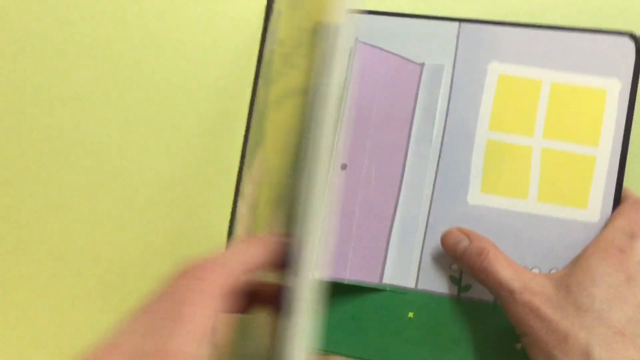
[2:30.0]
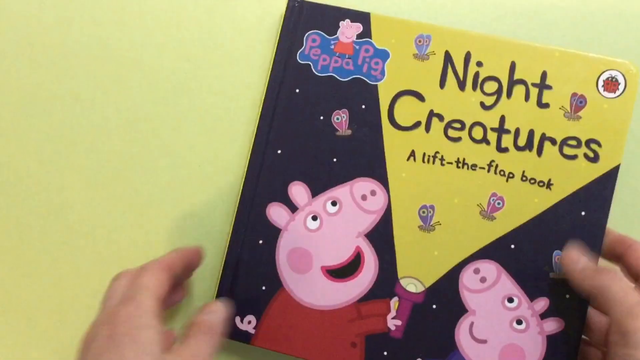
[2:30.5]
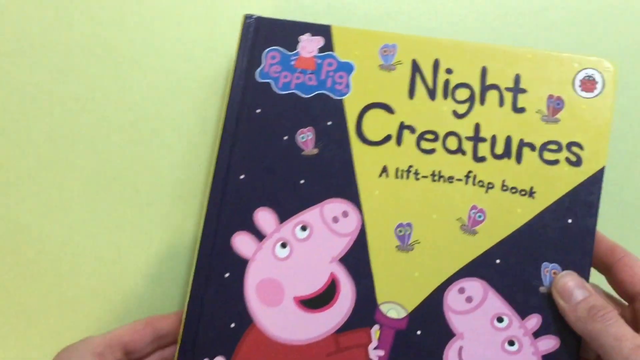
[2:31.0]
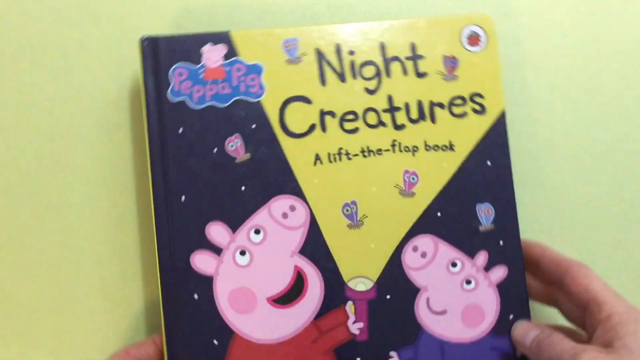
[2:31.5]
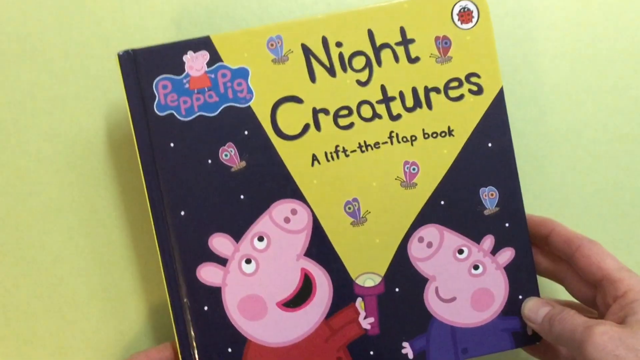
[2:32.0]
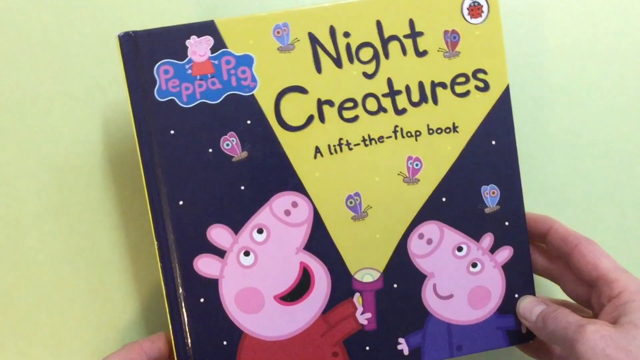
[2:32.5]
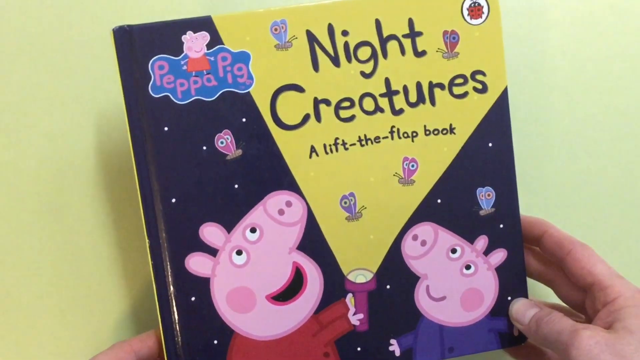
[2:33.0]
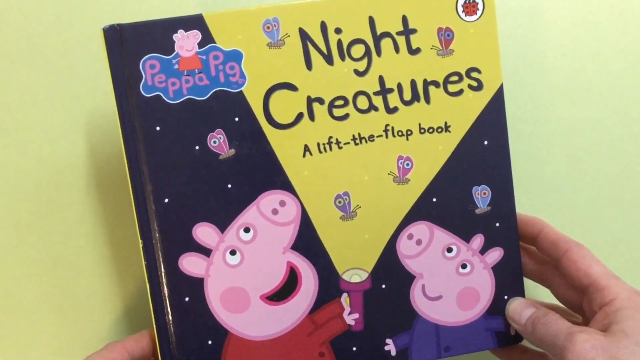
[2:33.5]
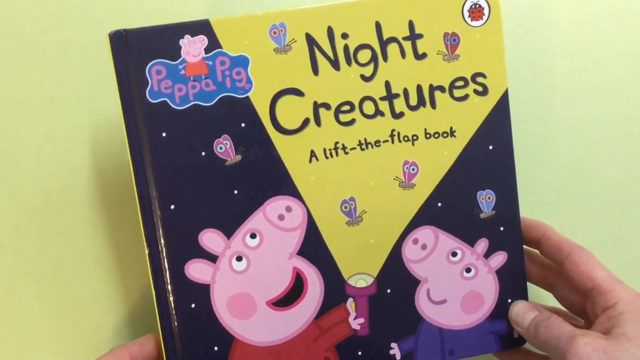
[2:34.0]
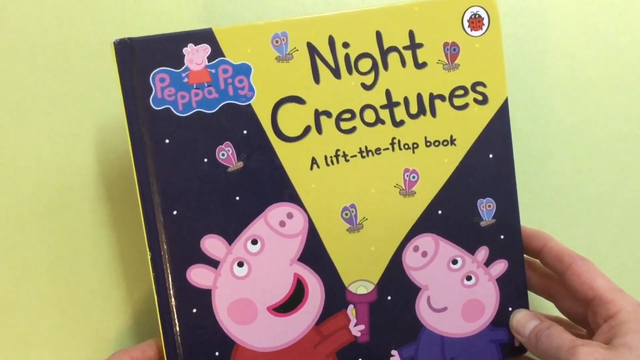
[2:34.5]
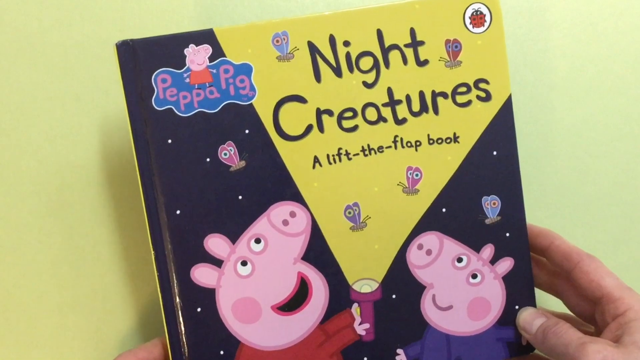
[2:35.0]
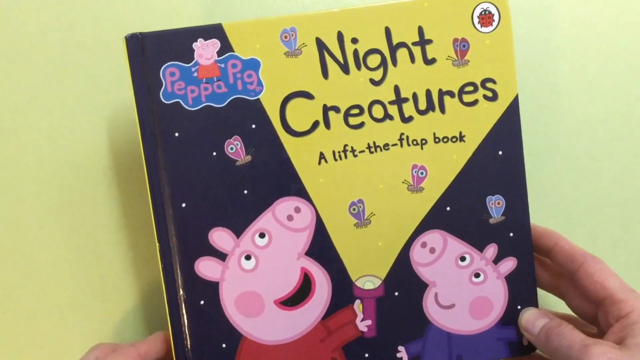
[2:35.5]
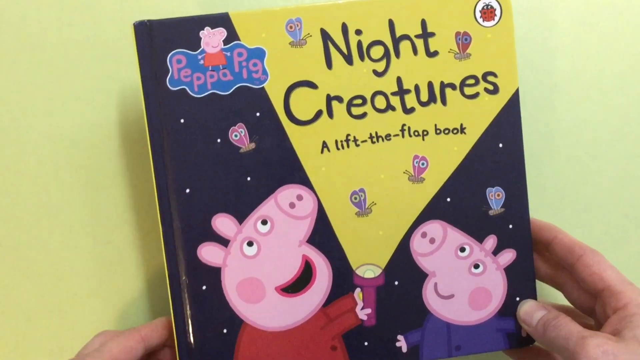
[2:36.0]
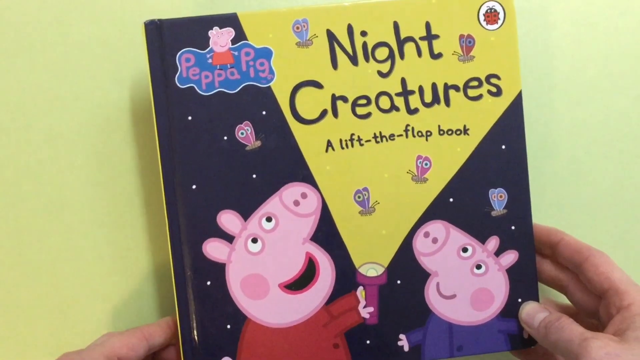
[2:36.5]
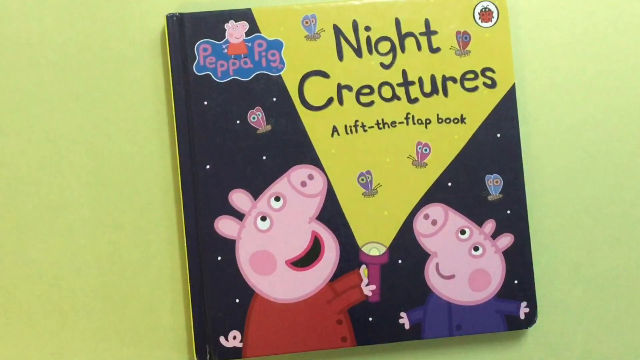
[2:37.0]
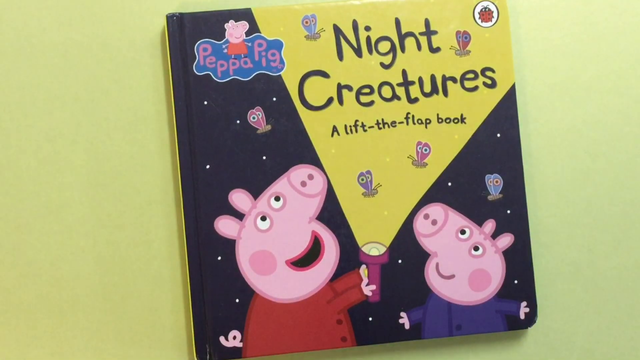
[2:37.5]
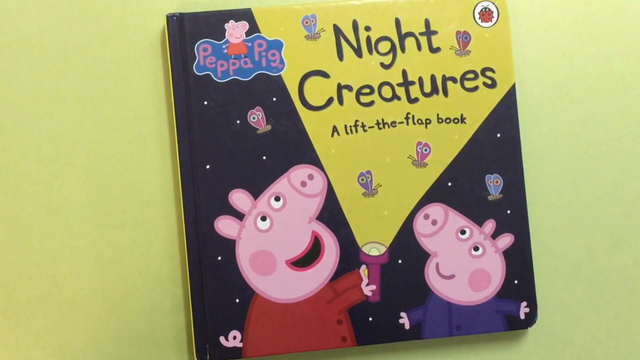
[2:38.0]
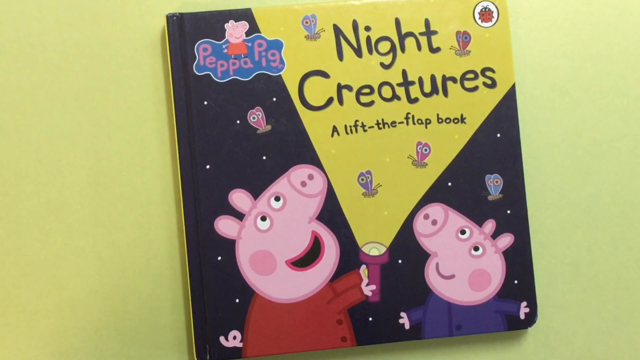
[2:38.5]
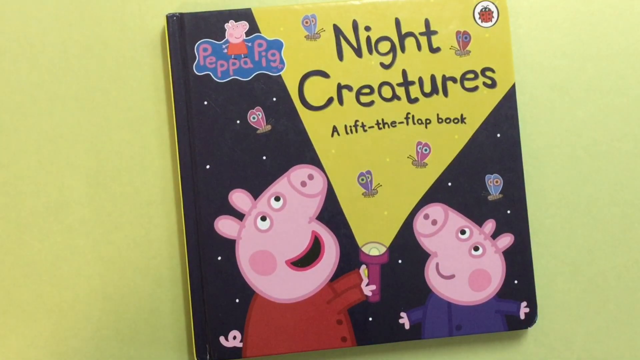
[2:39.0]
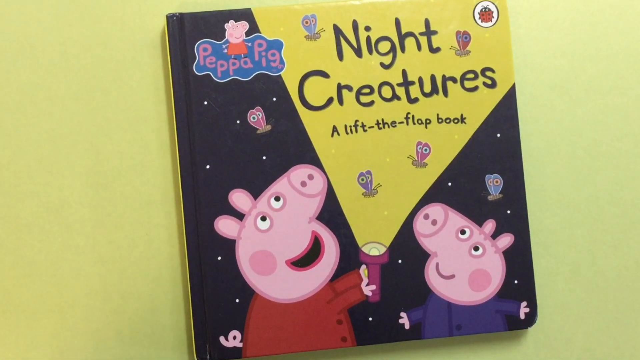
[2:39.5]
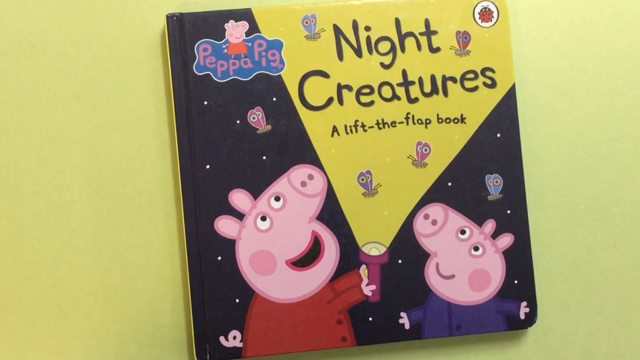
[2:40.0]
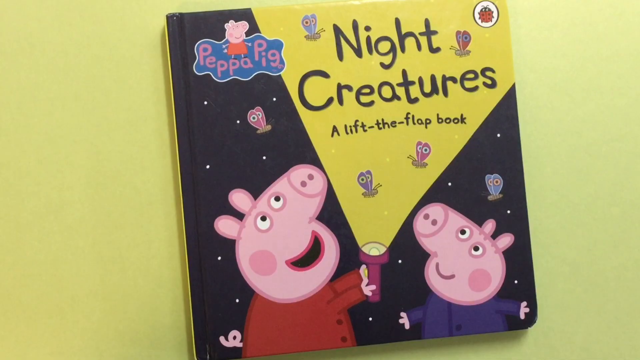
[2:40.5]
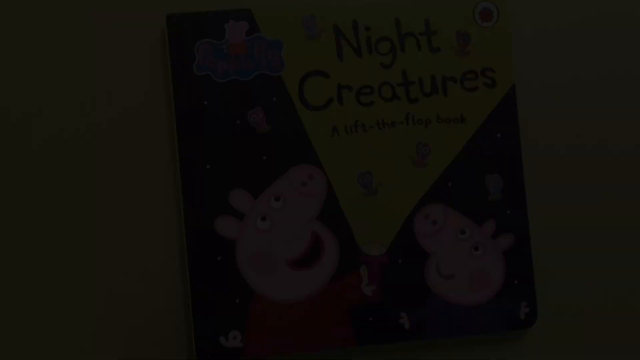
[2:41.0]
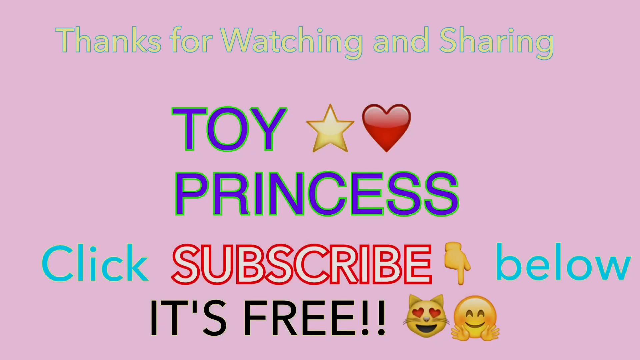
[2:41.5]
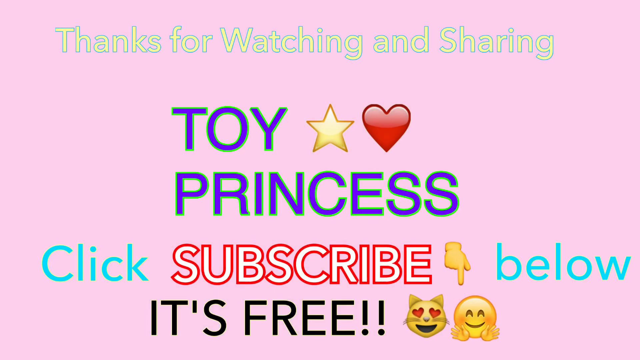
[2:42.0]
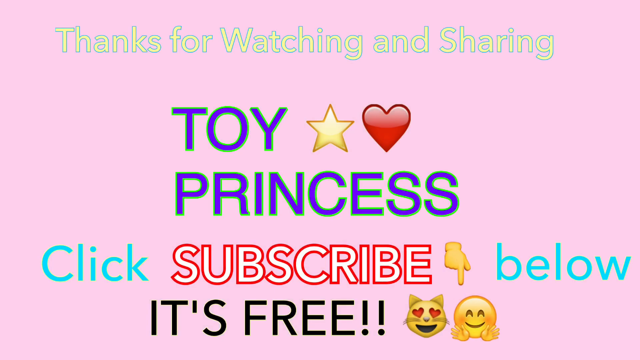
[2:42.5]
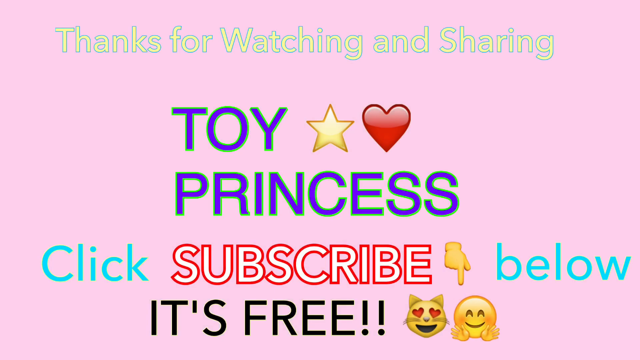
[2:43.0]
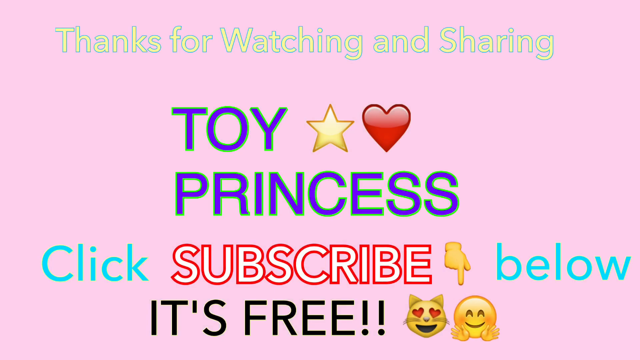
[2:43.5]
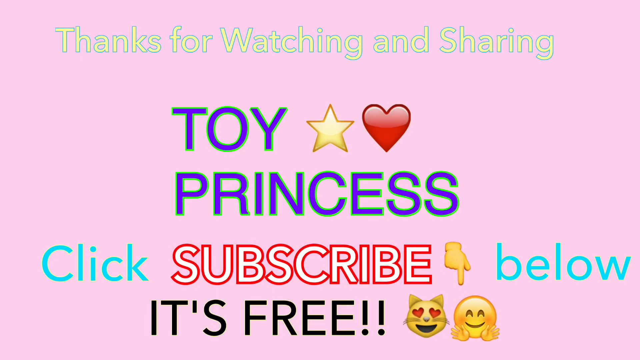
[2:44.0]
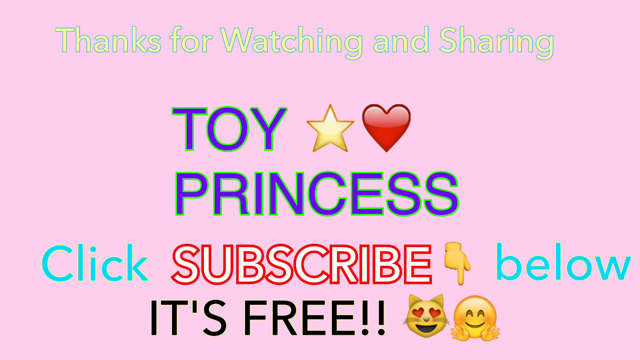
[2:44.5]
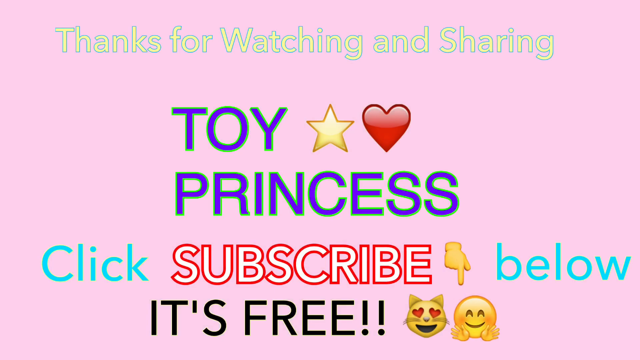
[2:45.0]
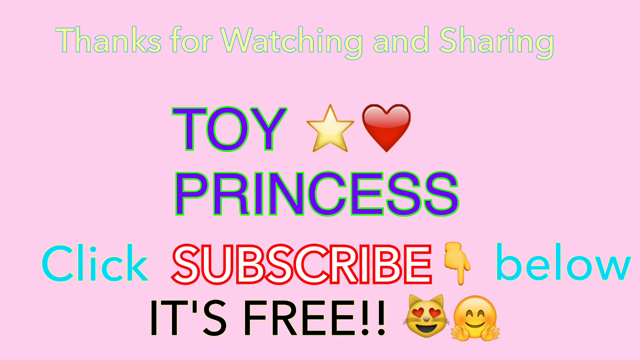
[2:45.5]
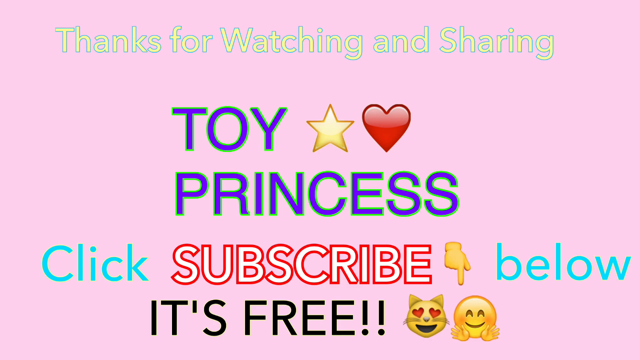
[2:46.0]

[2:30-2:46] The end of the book is reached, and the cover of the Peppa Pig book, Night Creatures, a Lift the Flap book, is shown. Peppa Pig, a little girl pig in a red dress, points a flashlight straight up into the air at moths, and her little brother looks straight up too. A little ladybug is at the top in a circle. A person's hands hold the book; they have been turning the book's pages and moving the flaps.